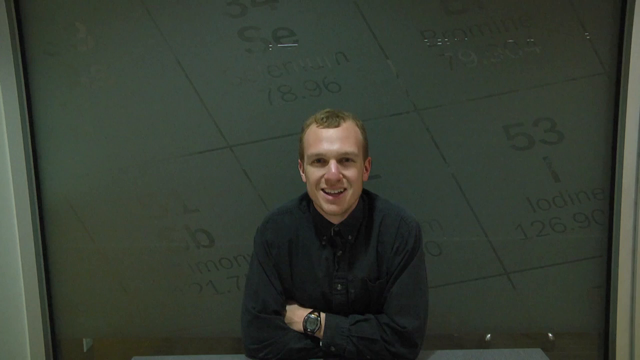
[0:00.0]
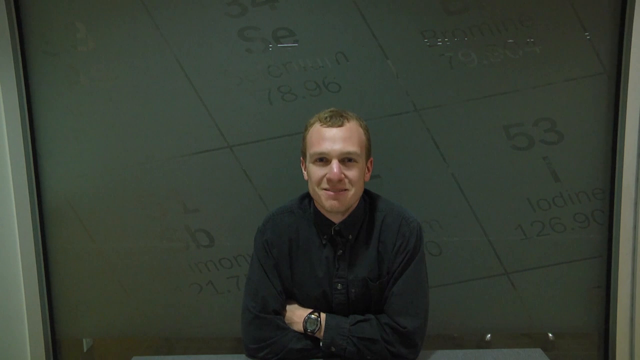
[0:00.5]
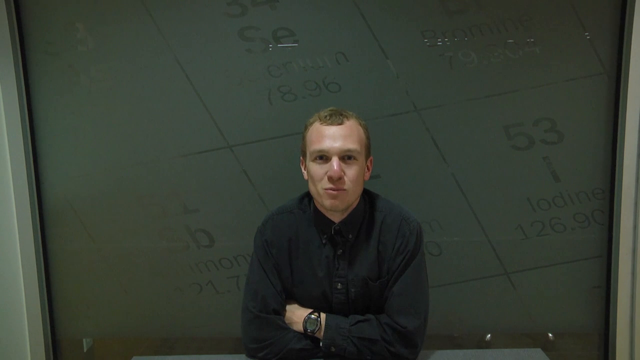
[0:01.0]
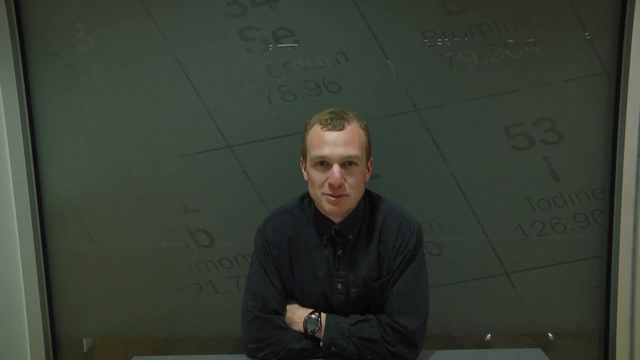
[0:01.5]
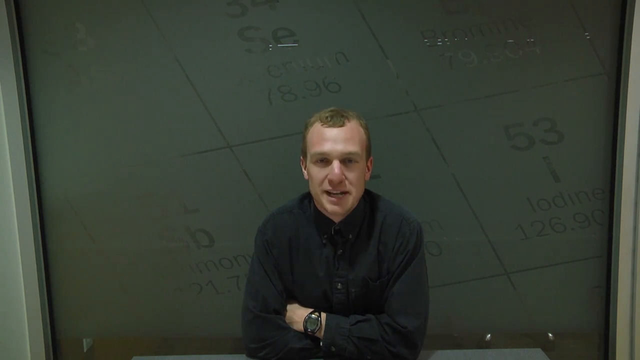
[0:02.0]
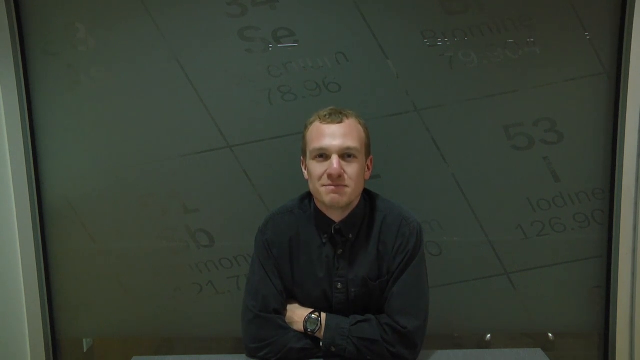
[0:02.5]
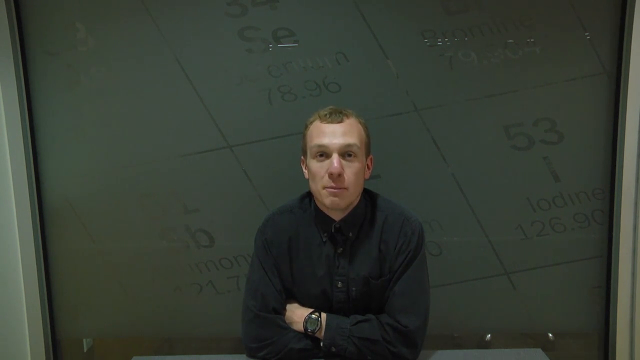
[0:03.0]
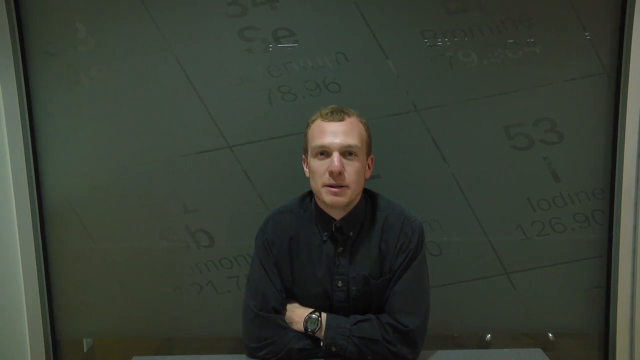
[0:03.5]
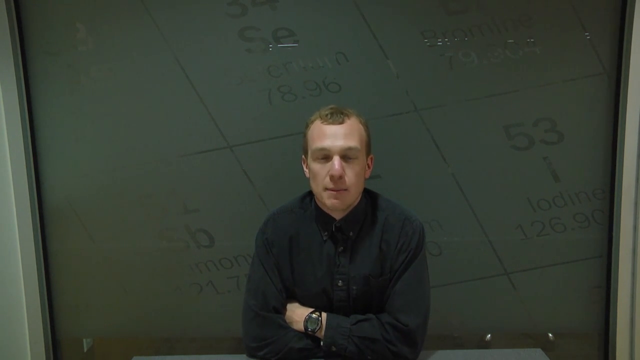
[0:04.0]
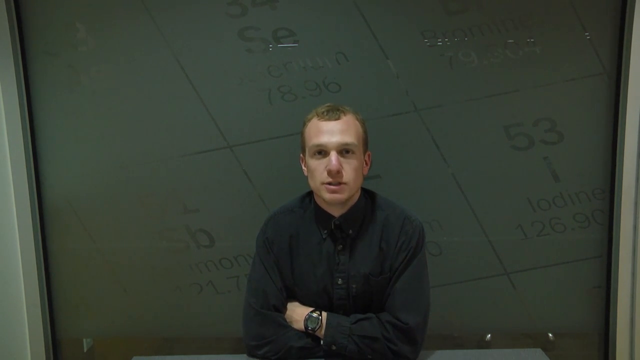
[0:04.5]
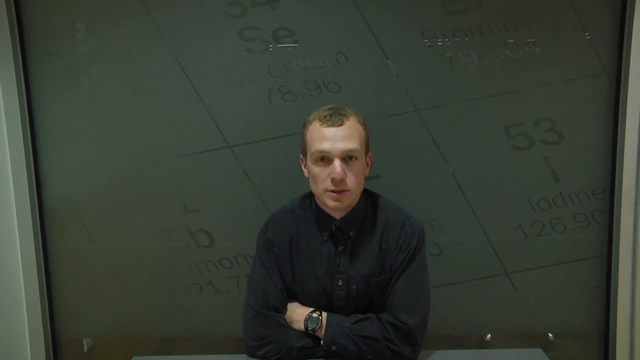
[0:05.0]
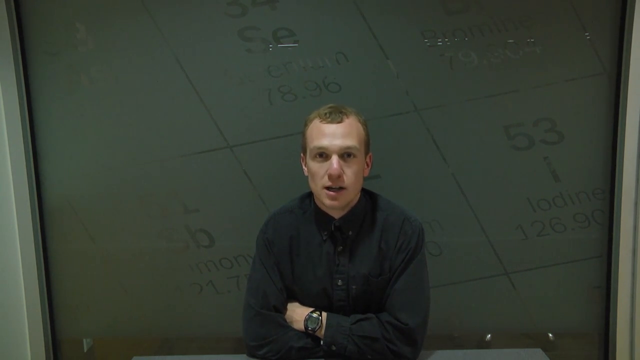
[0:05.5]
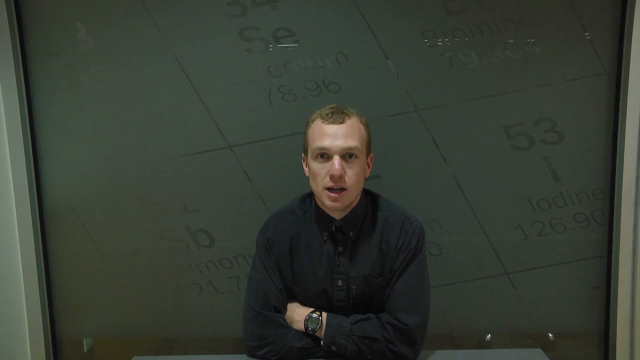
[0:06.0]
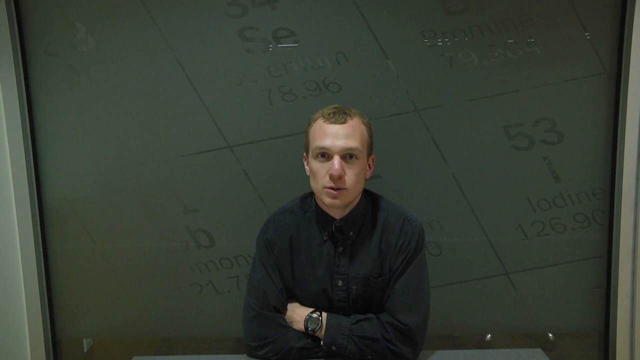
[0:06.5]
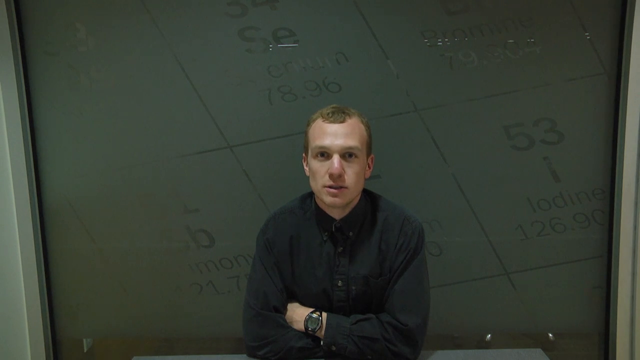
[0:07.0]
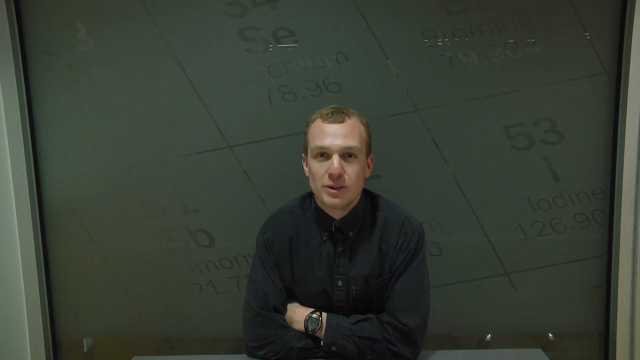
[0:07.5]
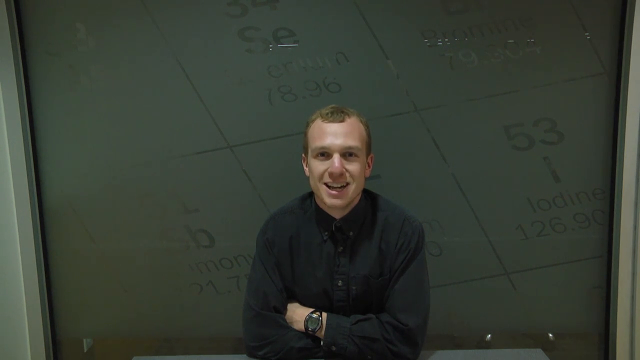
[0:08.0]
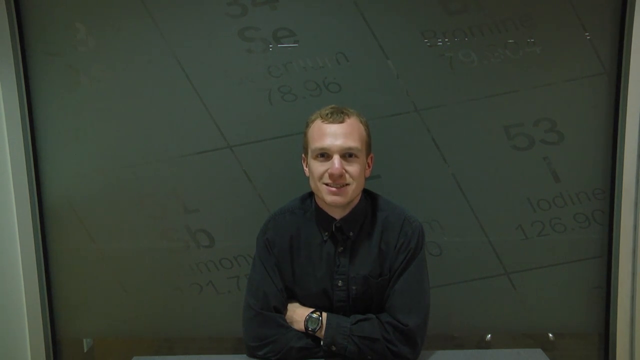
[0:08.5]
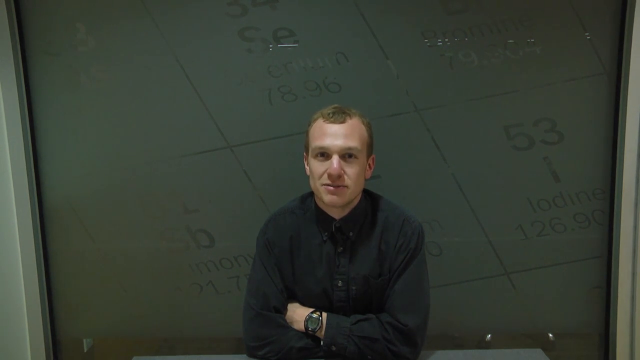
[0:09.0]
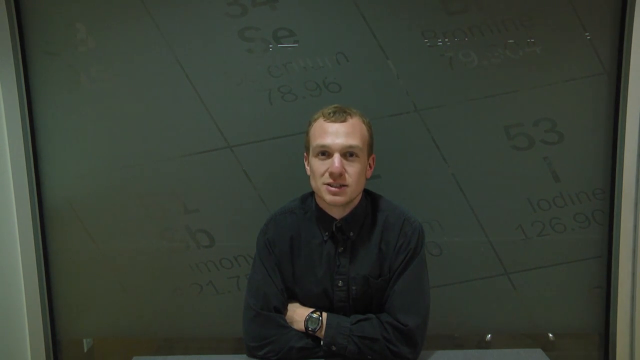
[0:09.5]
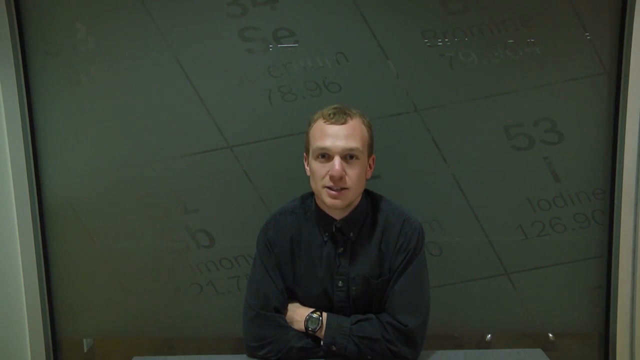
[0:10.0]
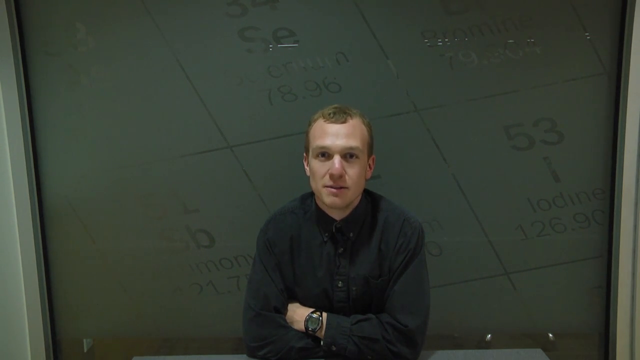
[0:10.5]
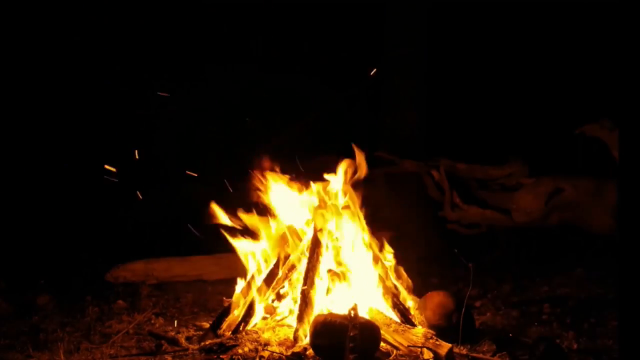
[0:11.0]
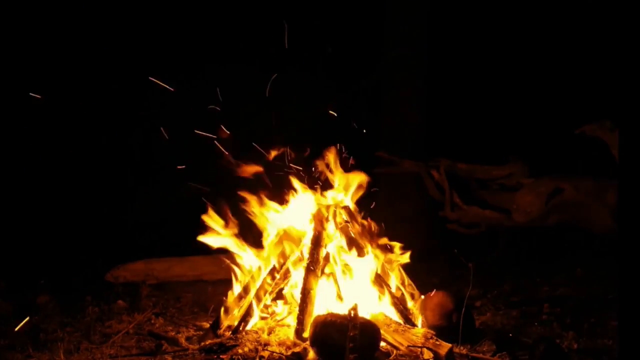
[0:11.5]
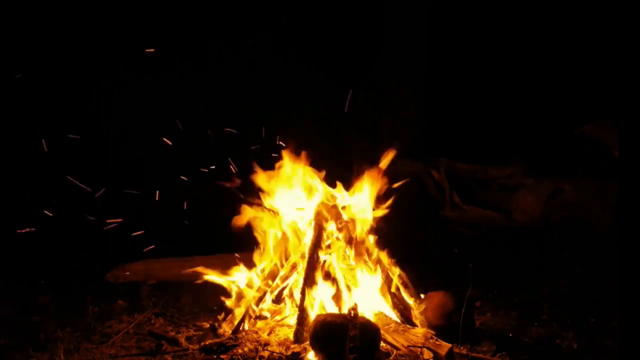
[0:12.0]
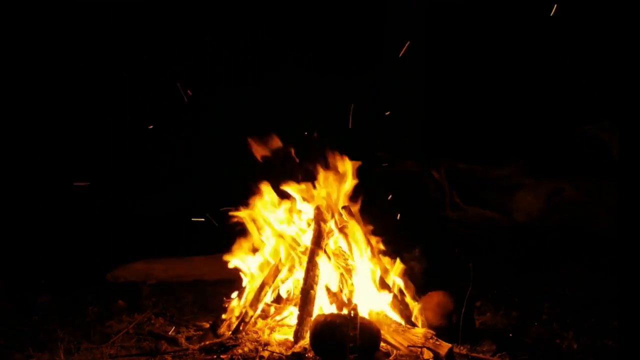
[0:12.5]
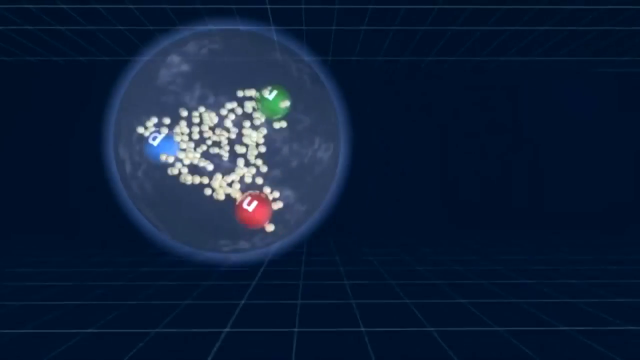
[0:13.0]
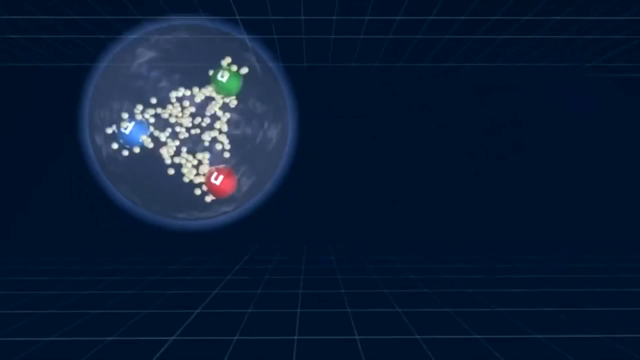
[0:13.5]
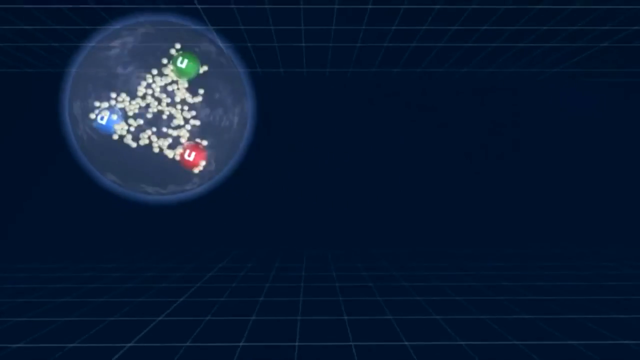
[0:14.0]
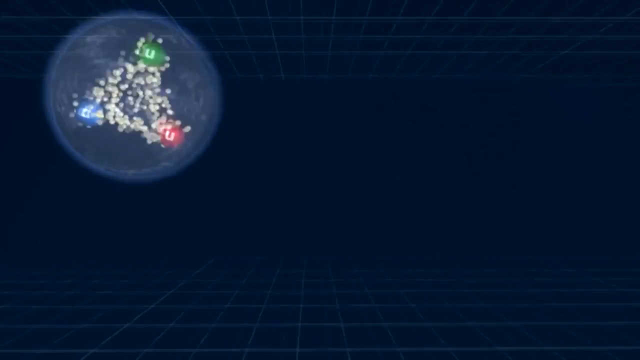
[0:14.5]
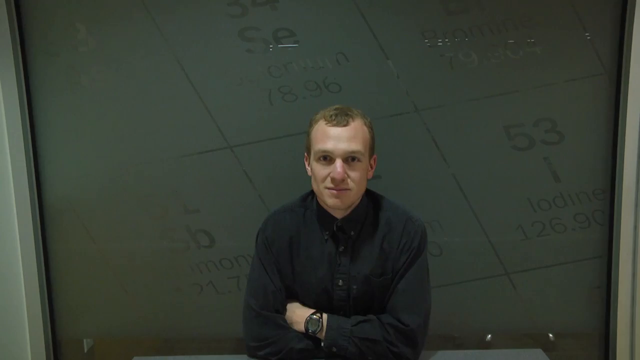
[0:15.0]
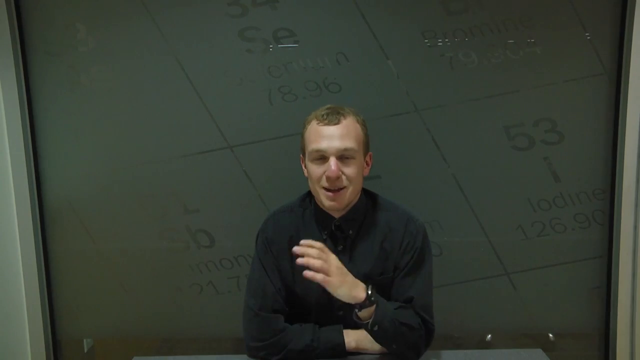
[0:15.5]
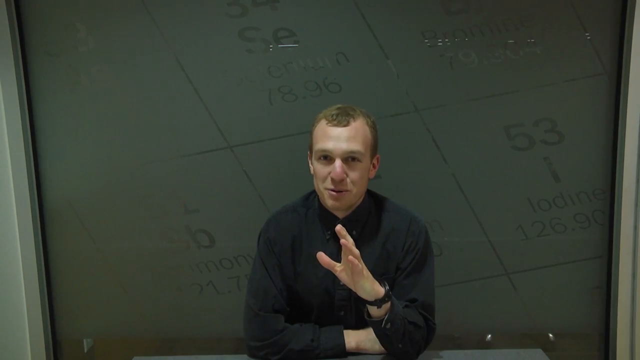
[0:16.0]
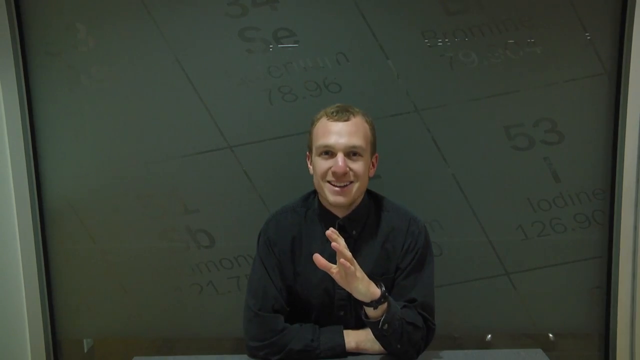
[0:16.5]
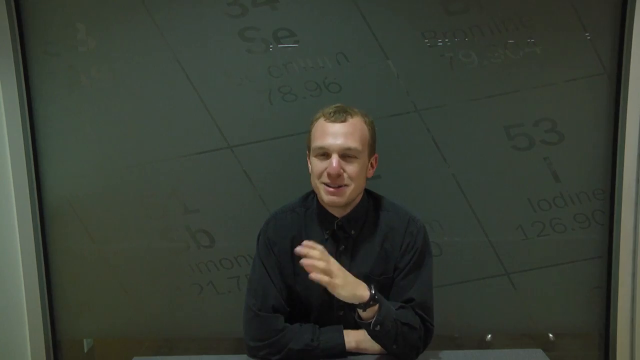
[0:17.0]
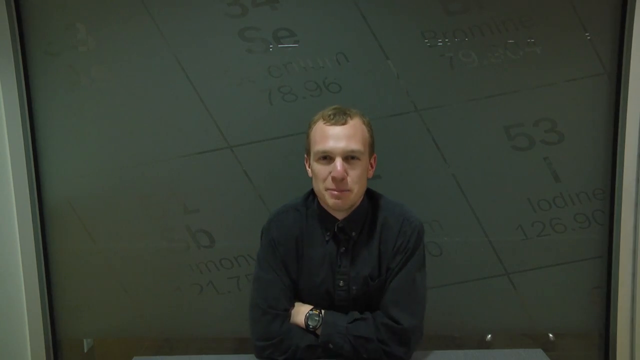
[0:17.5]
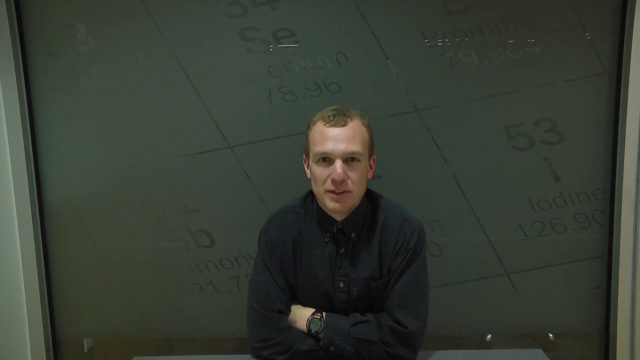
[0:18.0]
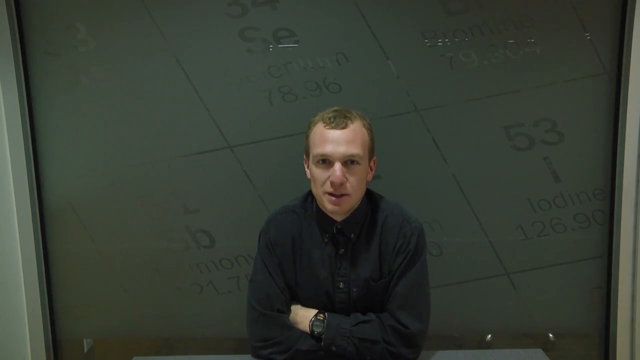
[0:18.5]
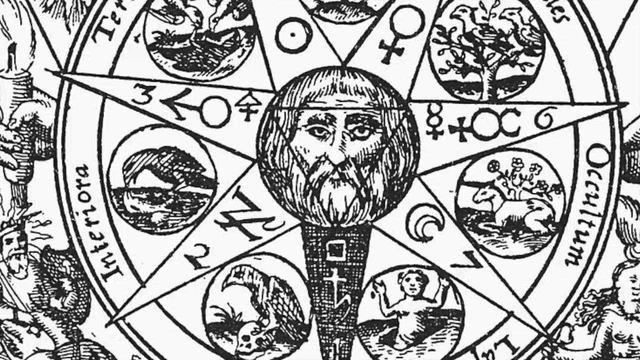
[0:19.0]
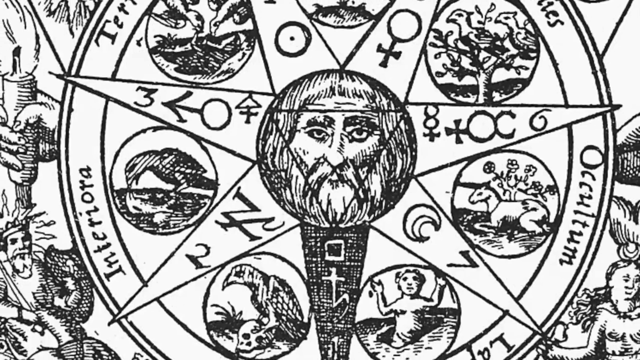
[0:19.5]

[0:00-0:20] A Caucasian man with somewhat blondish-brown hair sits in the middle of the bottom portion of the frame, with a kind of screen behind him showing some faint, hard-to-see letters and numbers. He is talking, seems to be smiling, and shakes his head up and down. The video cuts to a fire burning outside, with flames. Next comes a spinning ball with a roughly triangular item in the middle that almost looks like M&Ms, with a green circle, a red circle and a blue circle kind of spinning with them. The man continues to talk, and then a picture is briefly put up: an artistically drawn, black-and-white circular picture with a man's face, moons and stars, a horse and some birds. It also has numbers, including a 3, a 2, a 6 and a 7, and words including "interiara" and "oculum".